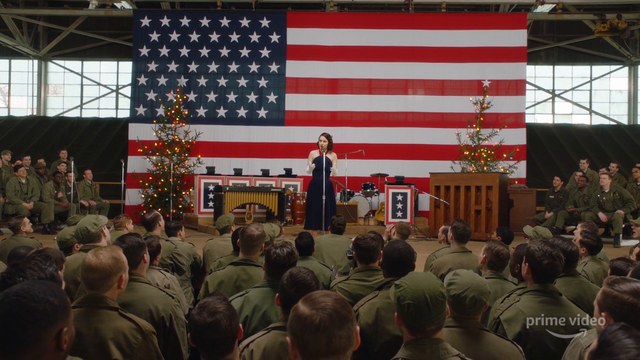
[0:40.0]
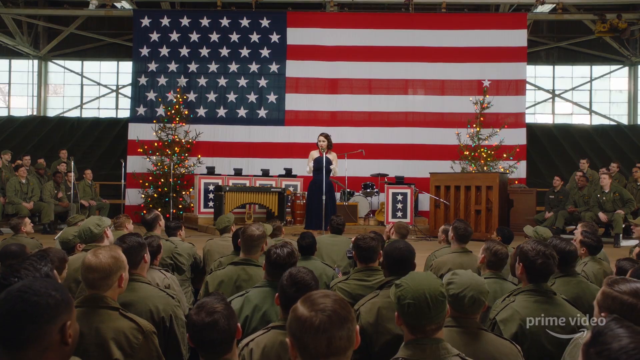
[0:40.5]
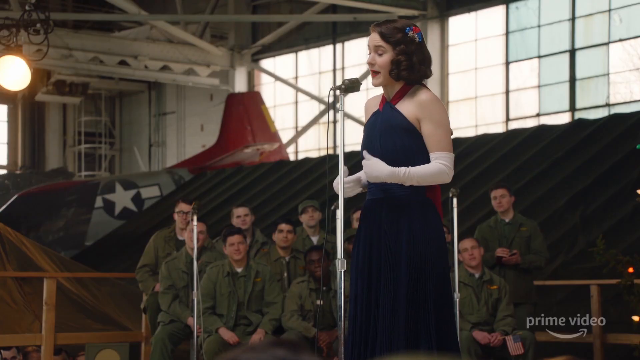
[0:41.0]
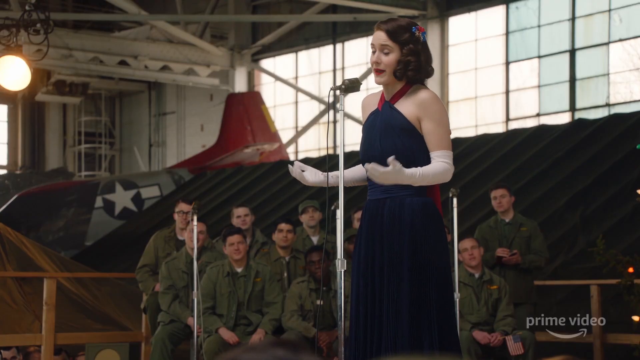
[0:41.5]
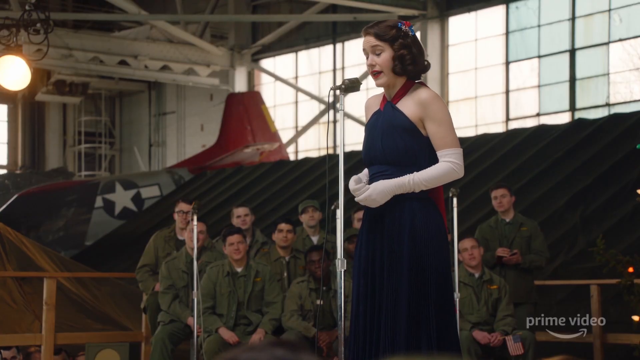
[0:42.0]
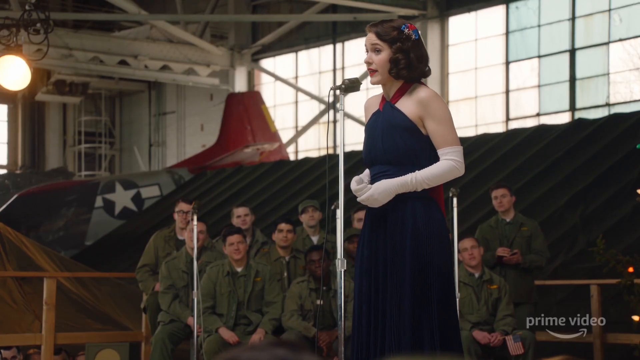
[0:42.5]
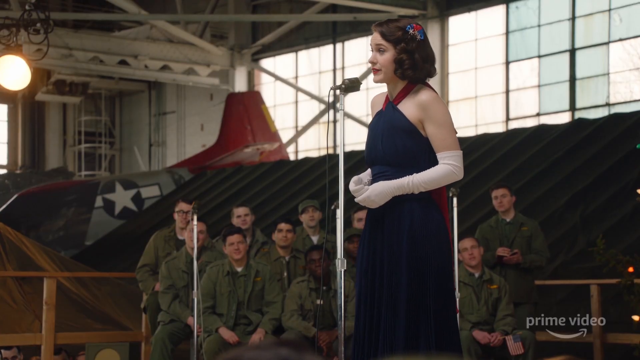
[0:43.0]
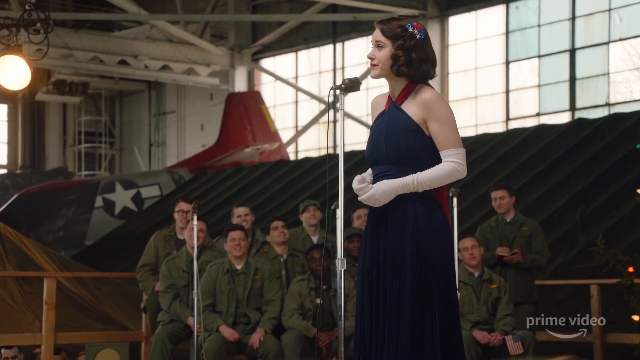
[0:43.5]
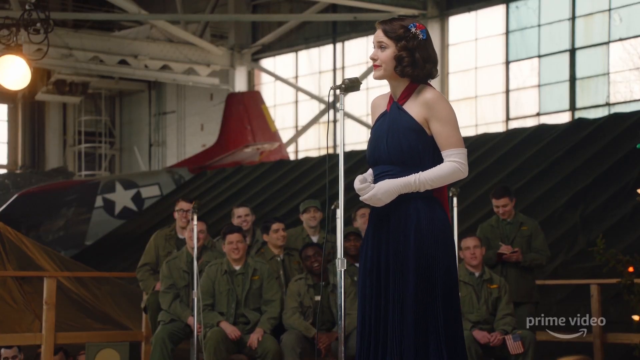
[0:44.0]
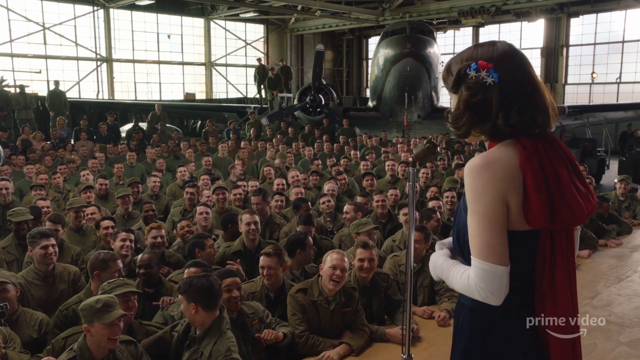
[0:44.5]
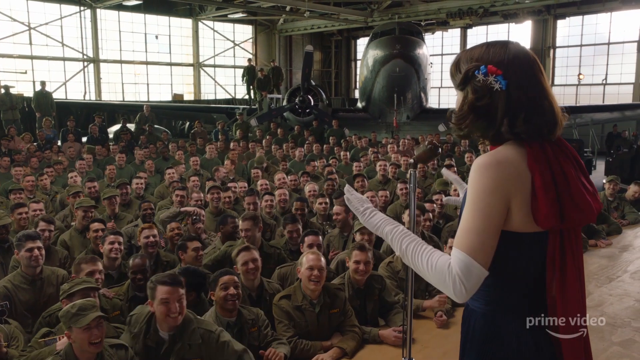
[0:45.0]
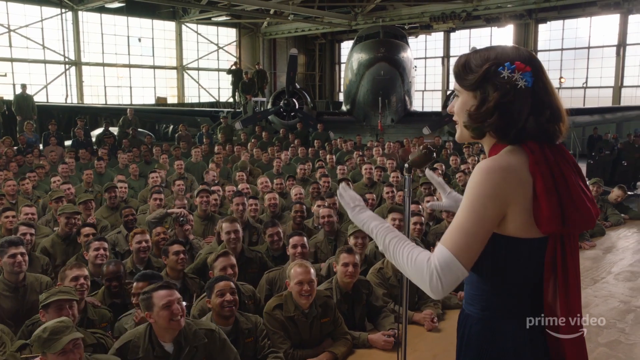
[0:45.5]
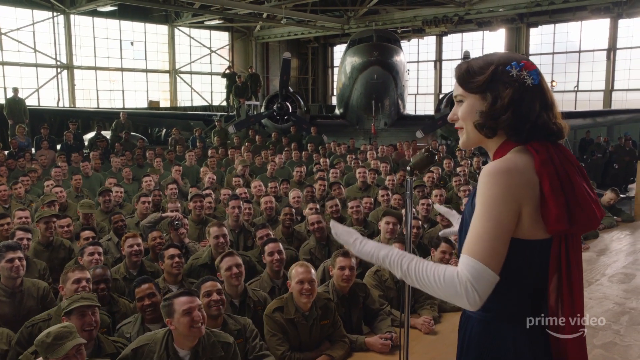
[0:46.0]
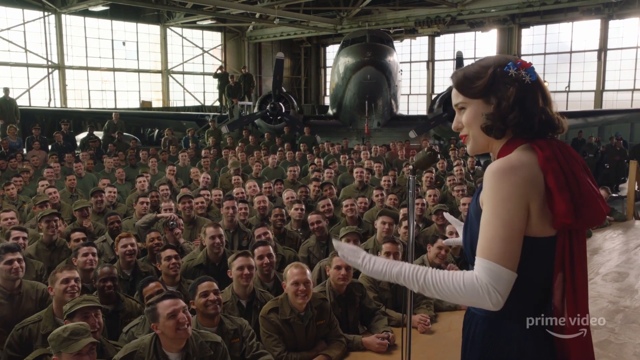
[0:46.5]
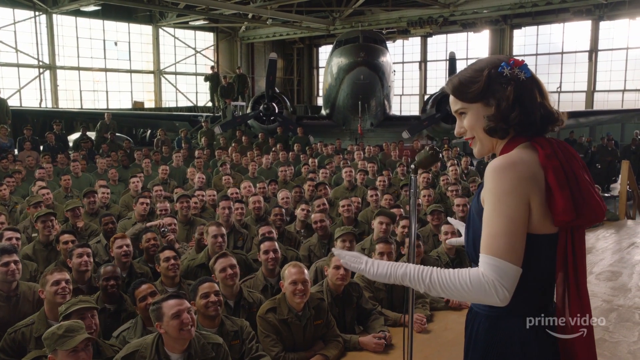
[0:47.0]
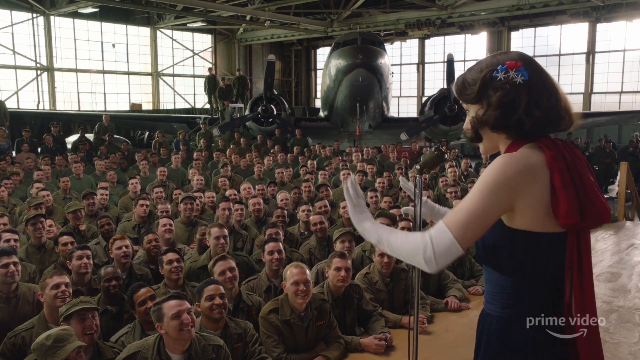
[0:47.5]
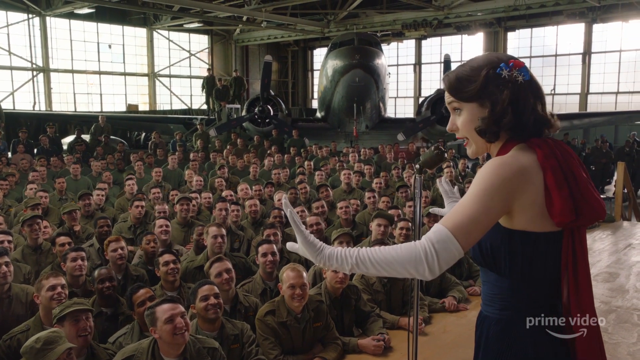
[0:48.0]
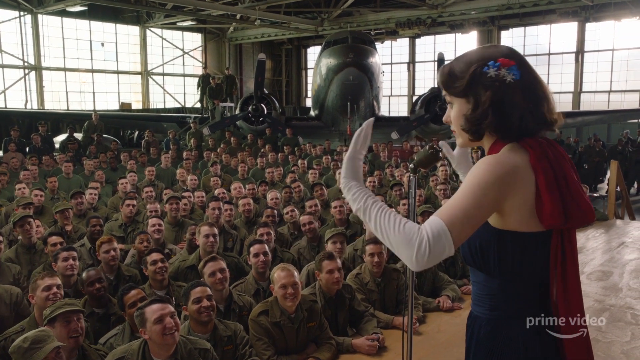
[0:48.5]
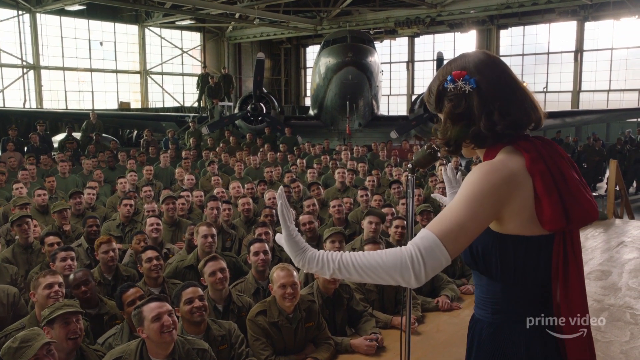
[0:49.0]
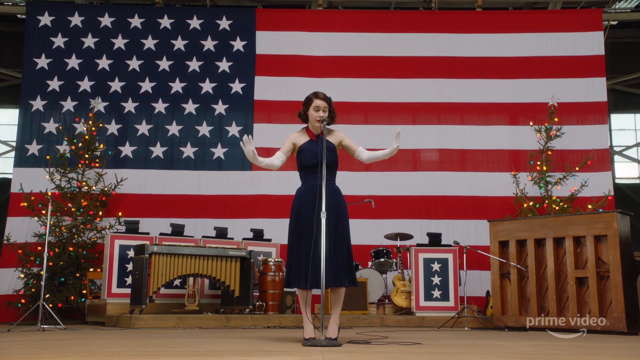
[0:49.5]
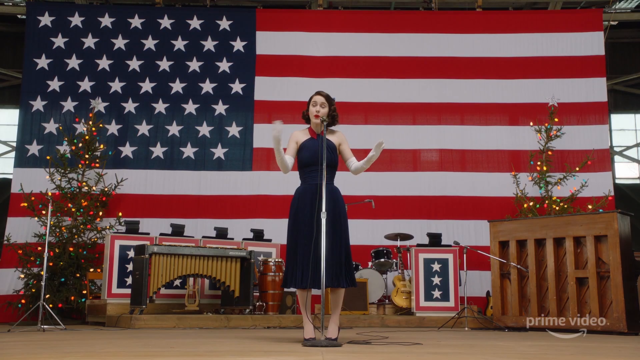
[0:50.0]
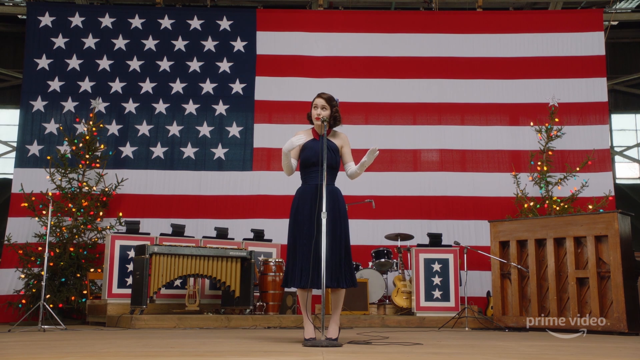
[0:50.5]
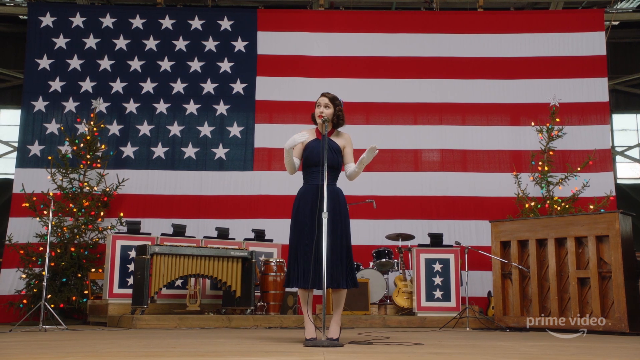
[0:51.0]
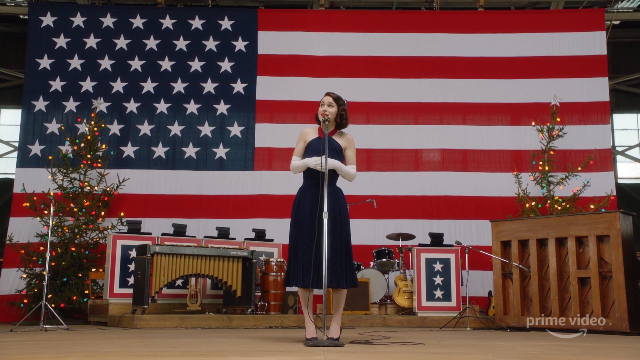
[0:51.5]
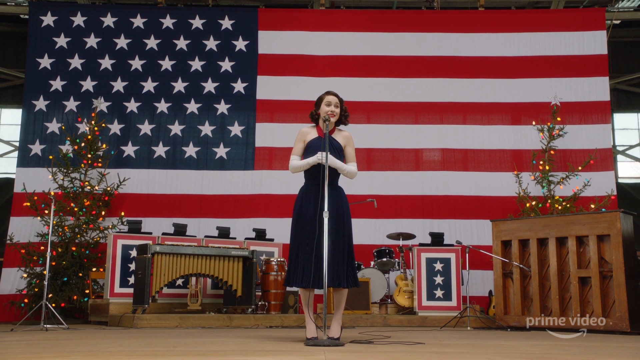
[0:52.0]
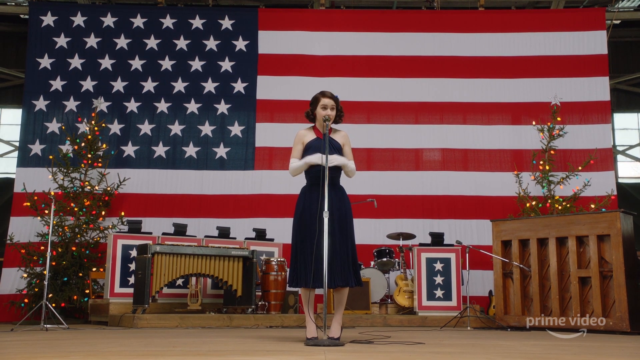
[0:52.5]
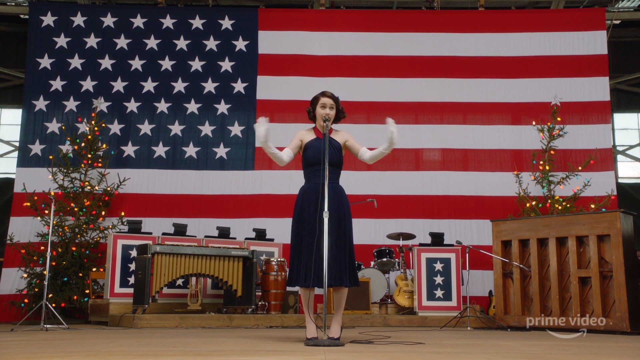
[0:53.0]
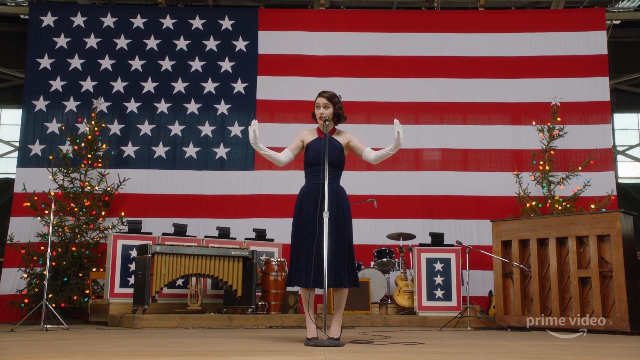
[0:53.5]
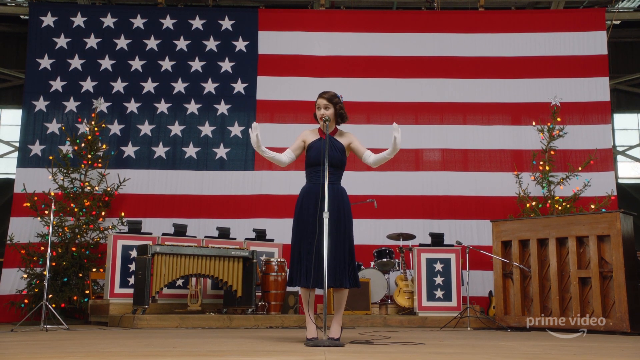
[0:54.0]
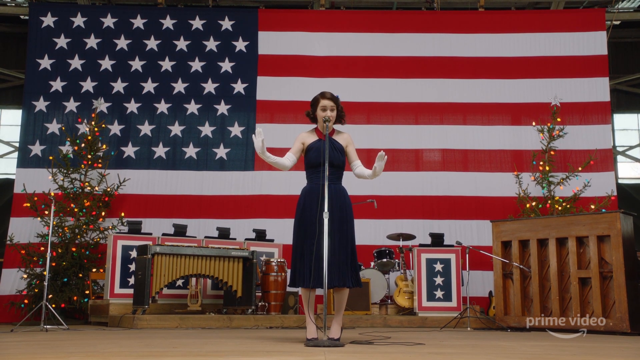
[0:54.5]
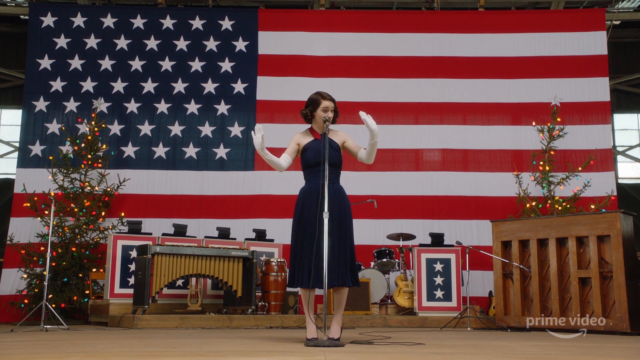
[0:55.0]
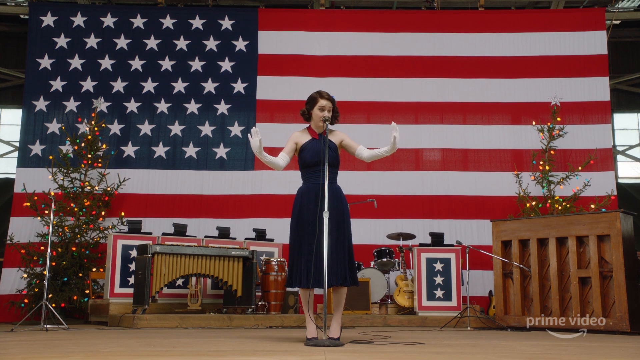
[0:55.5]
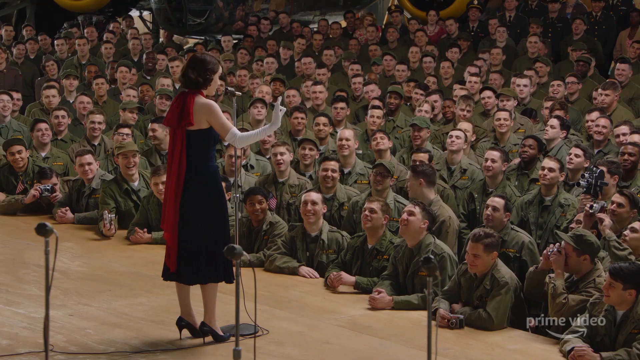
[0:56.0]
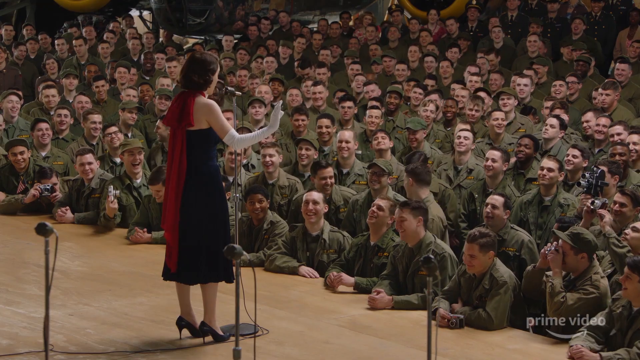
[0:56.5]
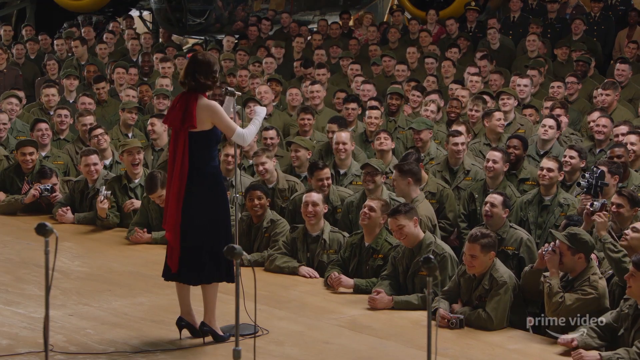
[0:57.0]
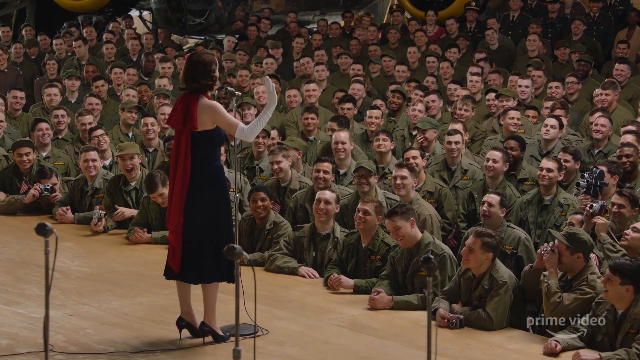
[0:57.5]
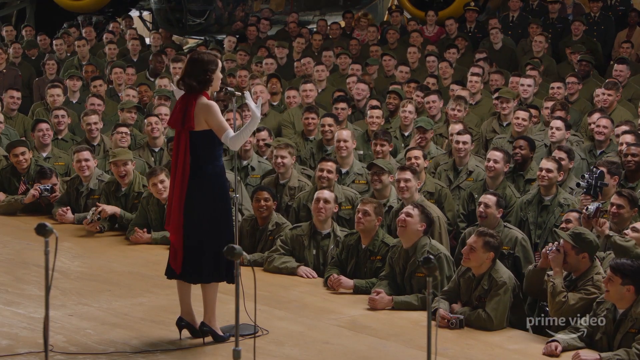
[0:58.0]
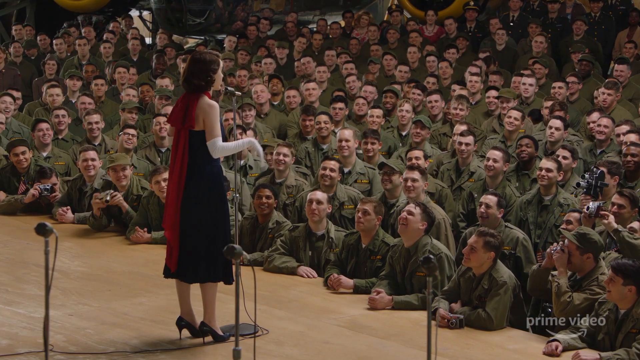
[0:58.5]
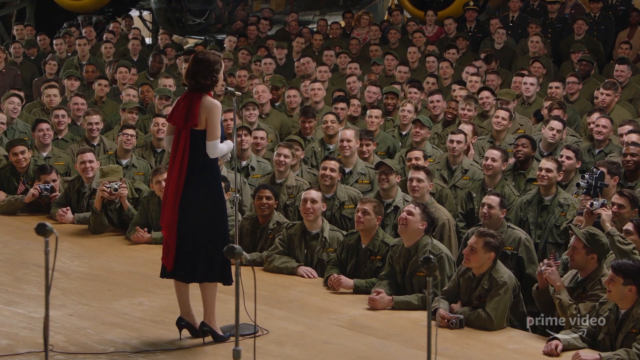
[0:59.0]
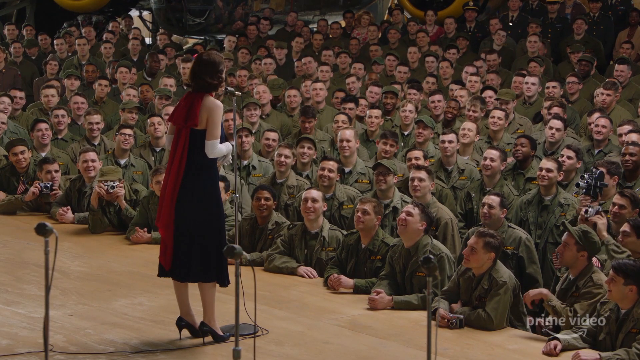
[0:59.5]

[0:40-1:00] The lady is still performing alone on the stage; it is unclear whether she is singing, doing spoken word or giving a speech. The shot is taken from the front, with a big American flag in the background, musical instruments including drums, and other people seated on the stage. Trees at the sides of the stage are decorated like Christmas trees. The lady speaks while the others listen and laugh. Inside the hangar a black plane is visible at the far back. She keeps performing, gesturing with her hands. A man is seen speaking, and other people are recording with cameras and video recorders.